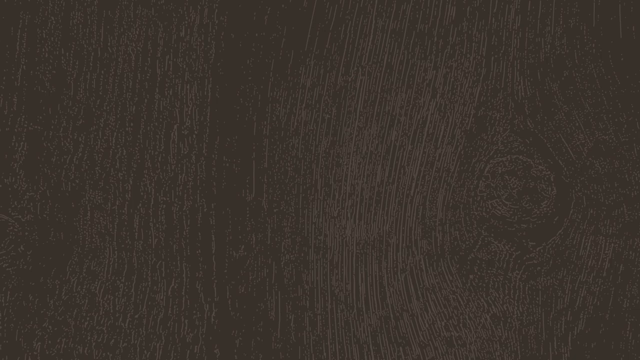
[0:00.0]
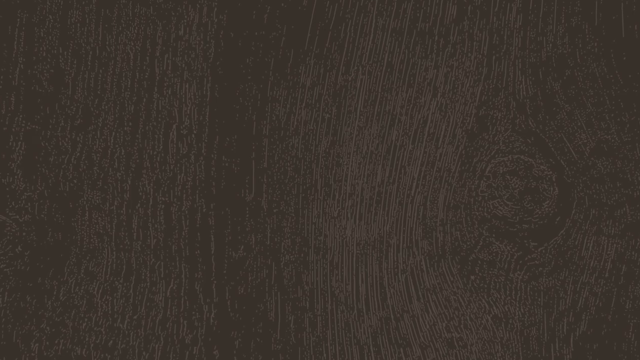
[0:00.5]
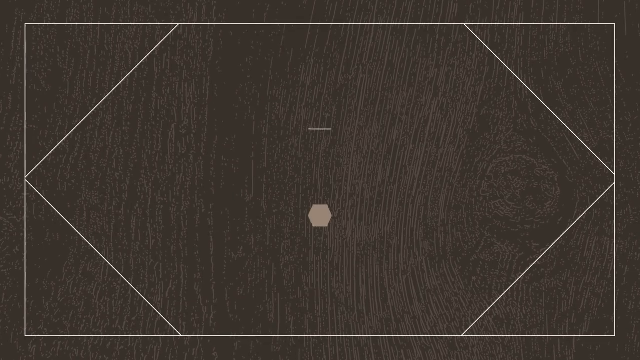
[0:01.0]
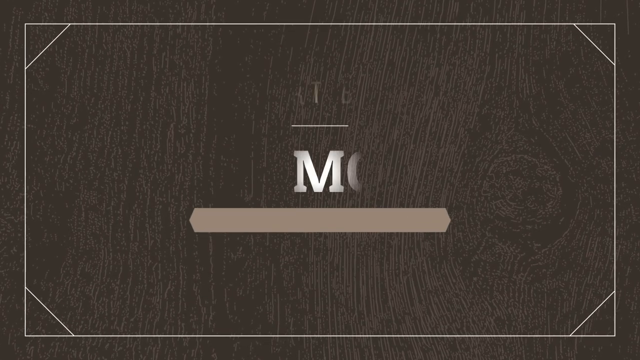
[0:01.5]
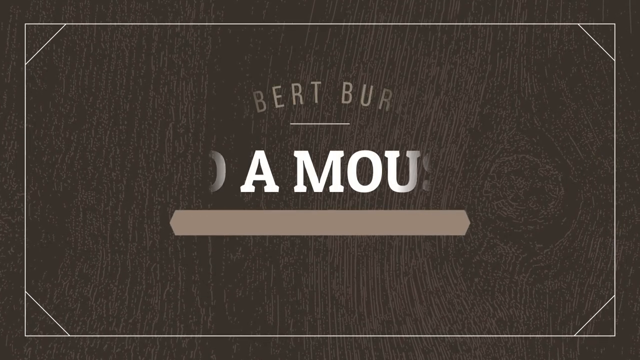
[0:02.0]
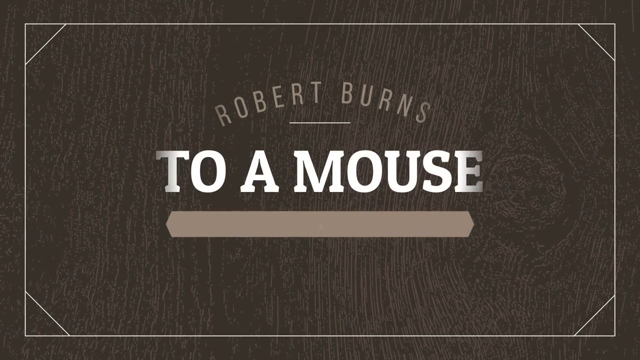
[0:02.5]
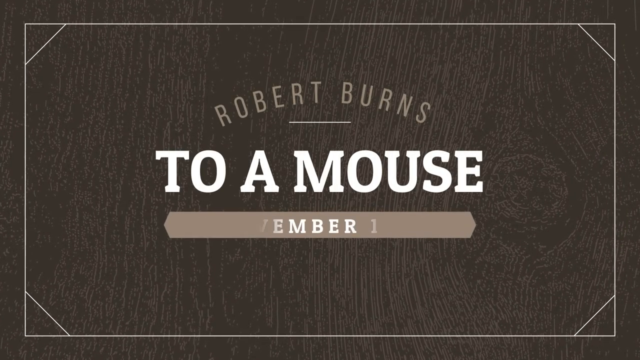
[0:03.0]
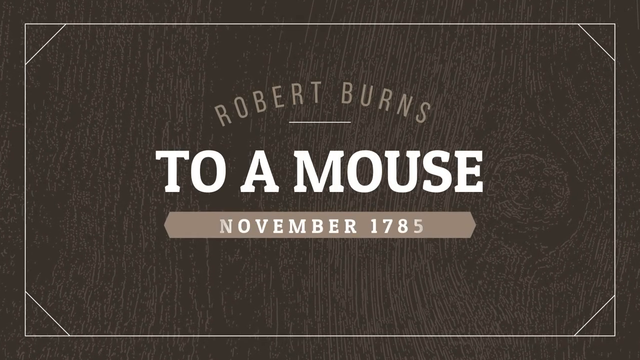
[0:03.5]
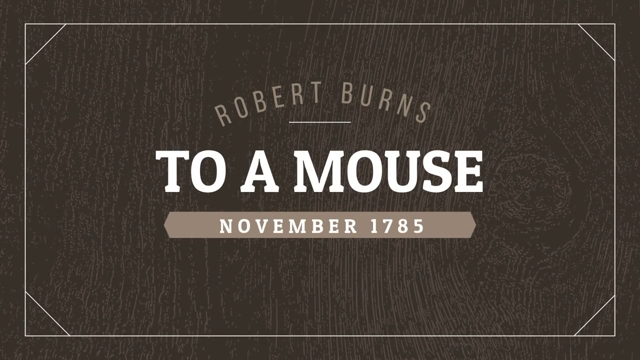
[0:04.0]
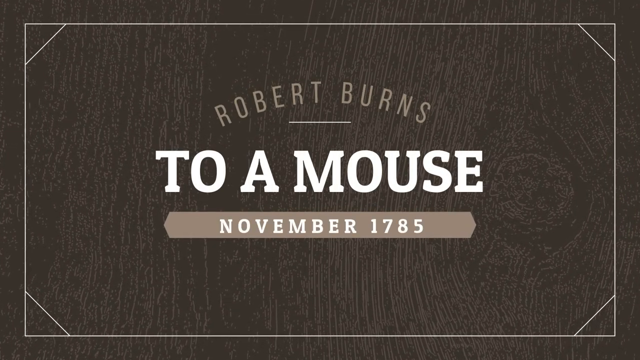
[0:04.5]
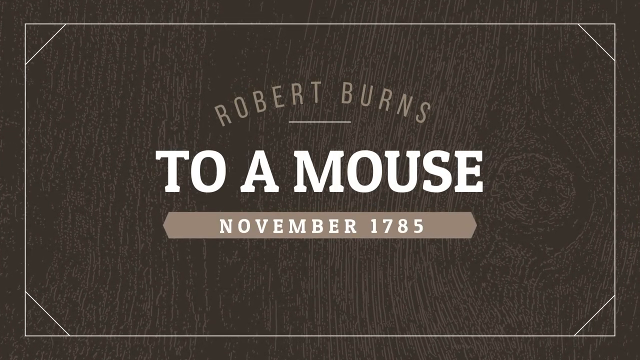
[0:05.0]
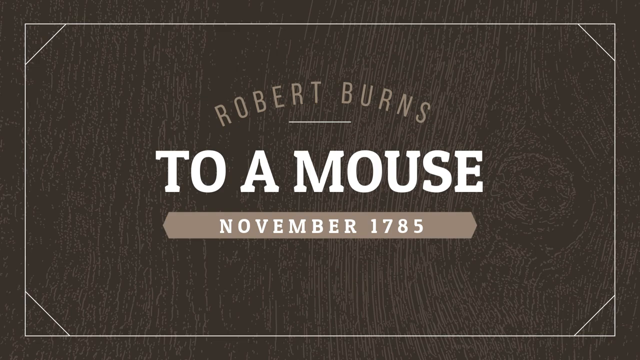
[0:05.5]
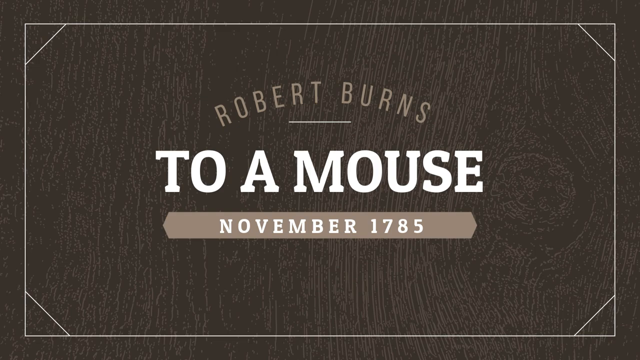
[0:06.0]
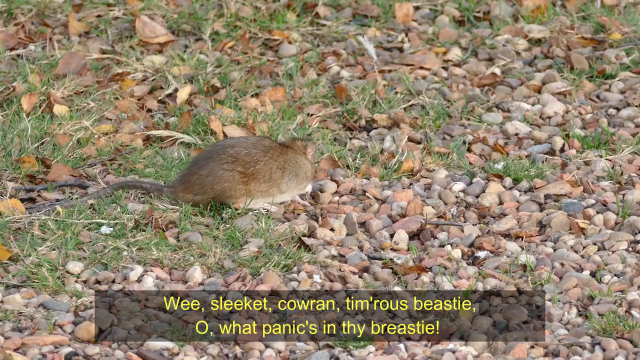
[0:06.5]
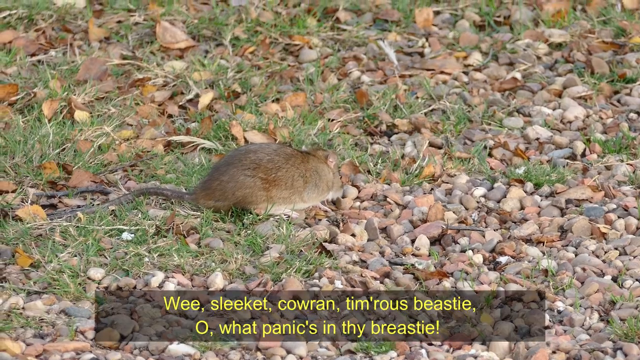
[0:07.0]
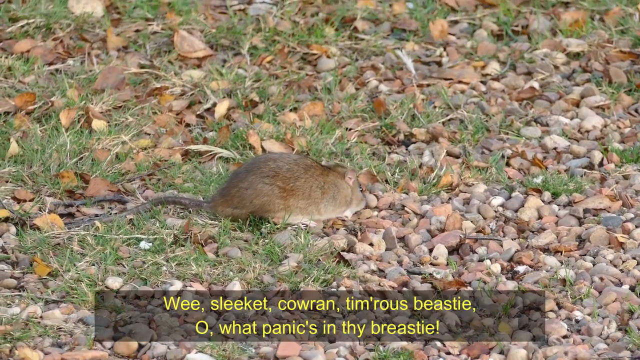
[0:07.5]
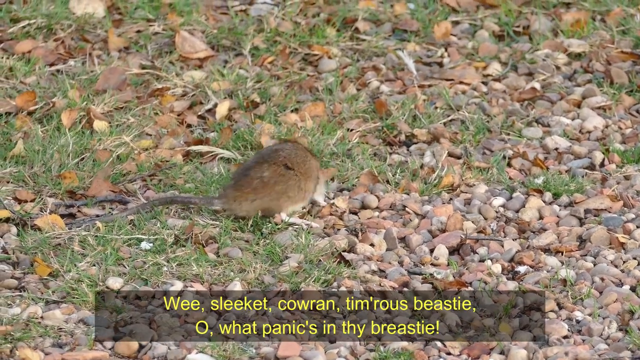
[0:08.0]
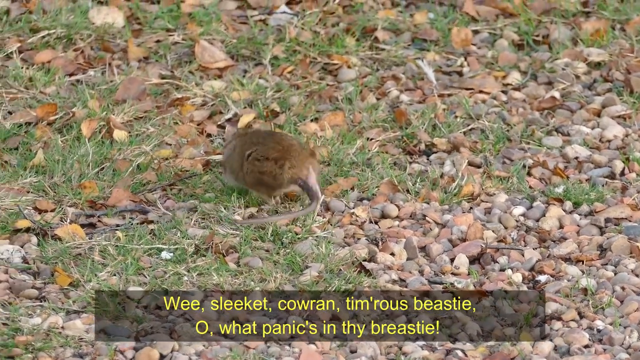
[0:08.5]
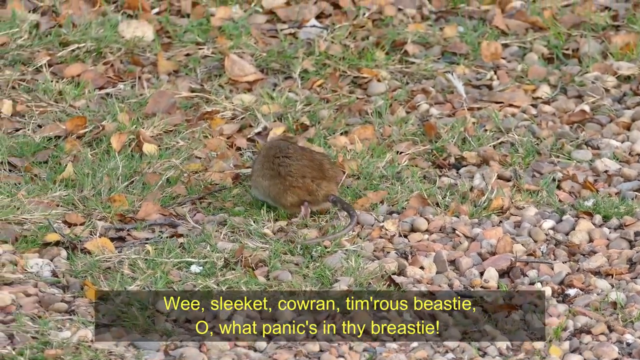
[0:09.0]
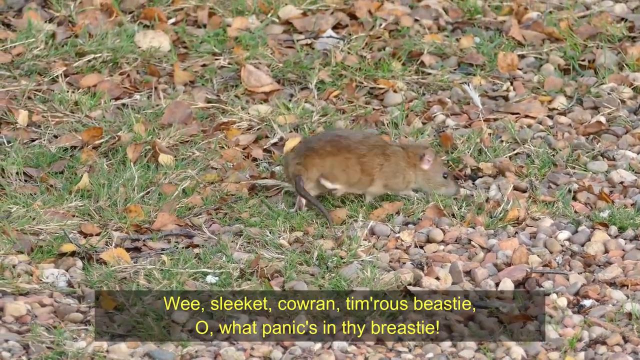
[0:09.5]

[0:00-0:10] A dark wood-green pattern fills the background as text appears on screen reading "Robert Burns, to a mouse, November 1785," styled so that it almost looks like a placard. "Robert Burns" is sort of arched across the top in tan, "to a mouse" runs across the center in white, and "November 1785" looks almost metallic on a tan background. The video then cuts to an image of a very big mouse, rat or some kind of rodent among grass, pebbles and dried fall leaves. Across the bottom, text written in what seems to be Scottish or Irish Gaelic slang reads "wee sleeket cowren tim'rous beastie oh what panic's in thy breastie." The field mouse, brown with a darker-colored tail and facing away from the camera, kind of scurries around, checking things out and sniffing in the grass.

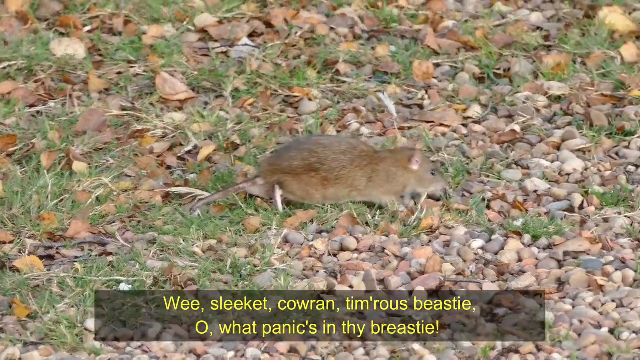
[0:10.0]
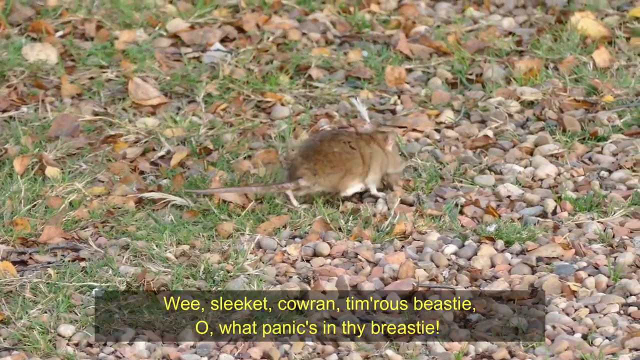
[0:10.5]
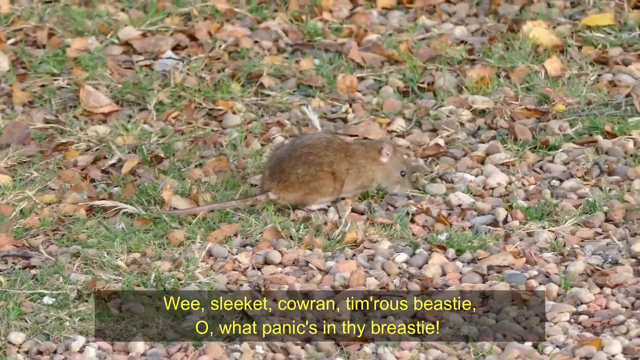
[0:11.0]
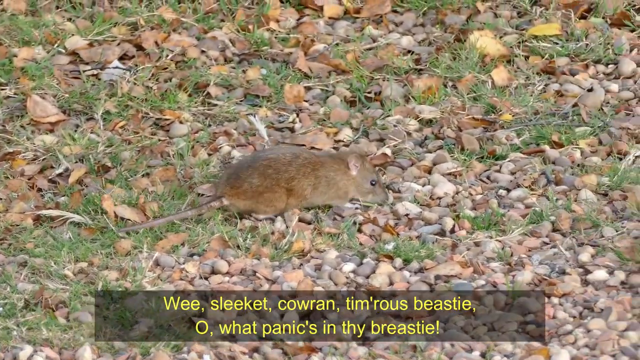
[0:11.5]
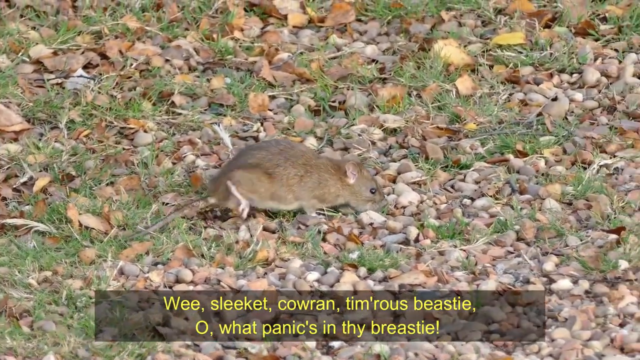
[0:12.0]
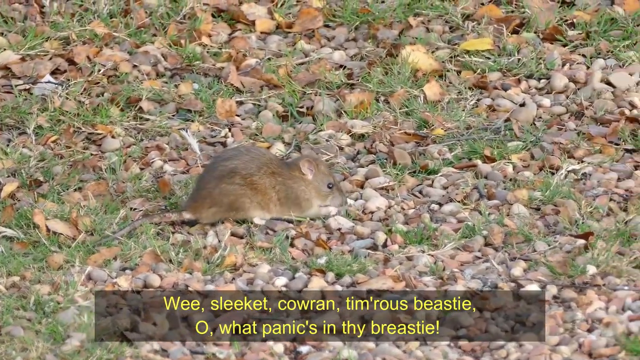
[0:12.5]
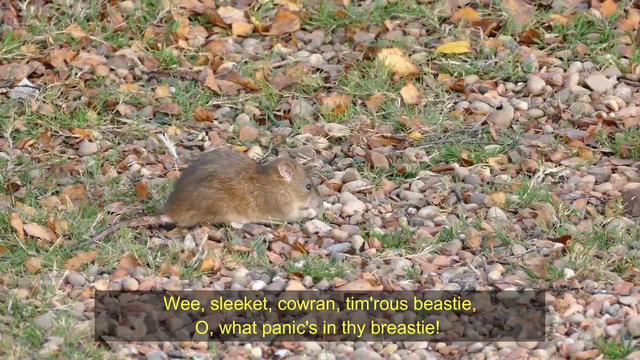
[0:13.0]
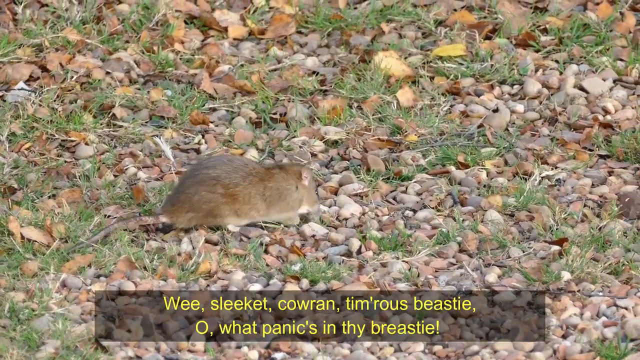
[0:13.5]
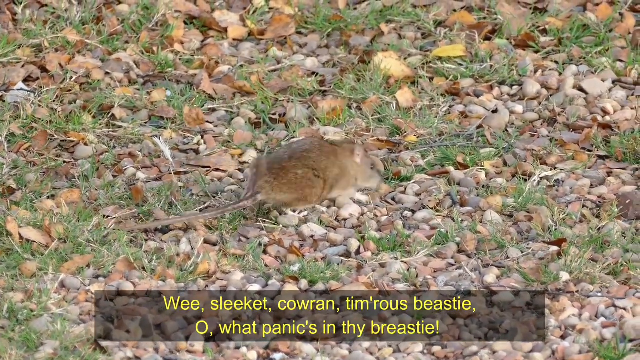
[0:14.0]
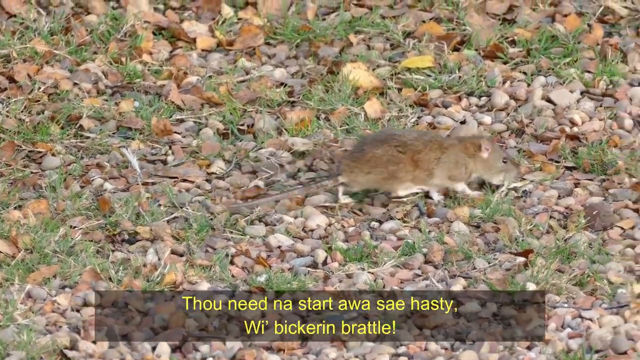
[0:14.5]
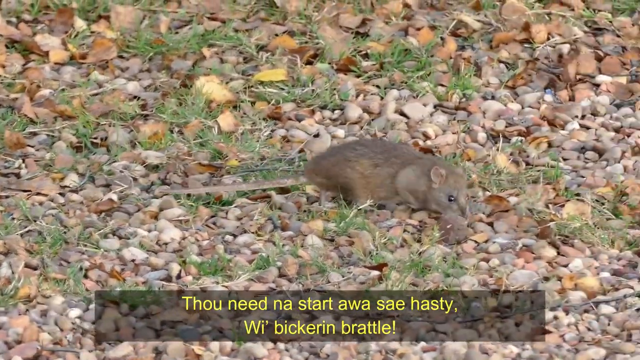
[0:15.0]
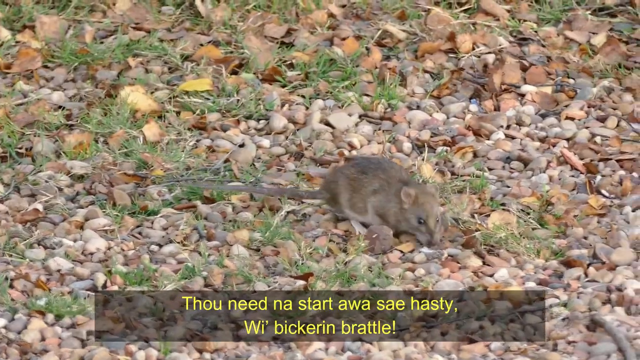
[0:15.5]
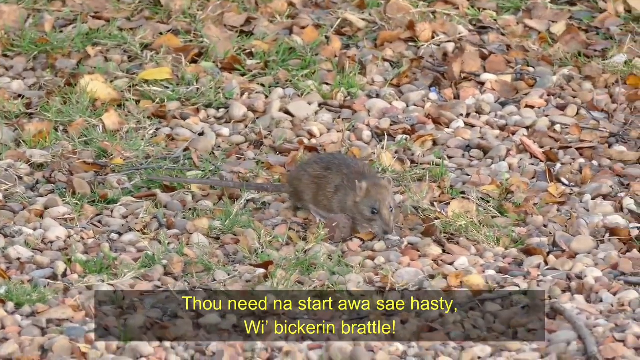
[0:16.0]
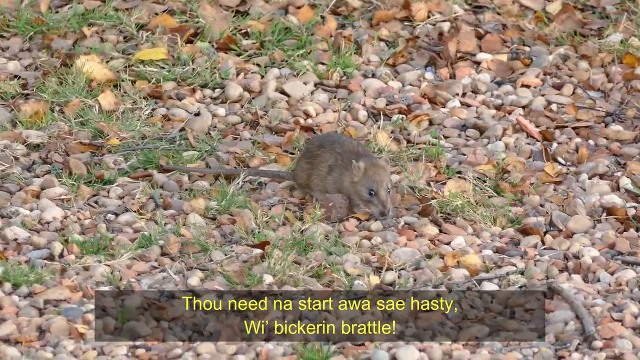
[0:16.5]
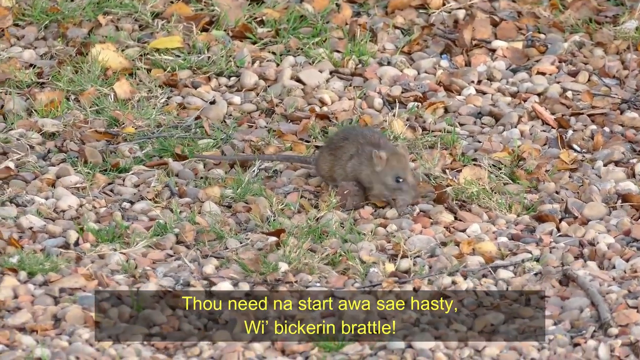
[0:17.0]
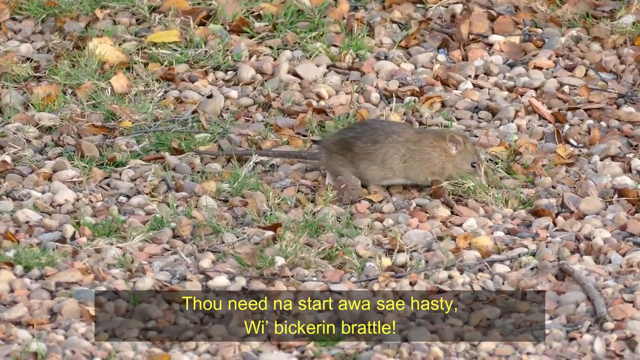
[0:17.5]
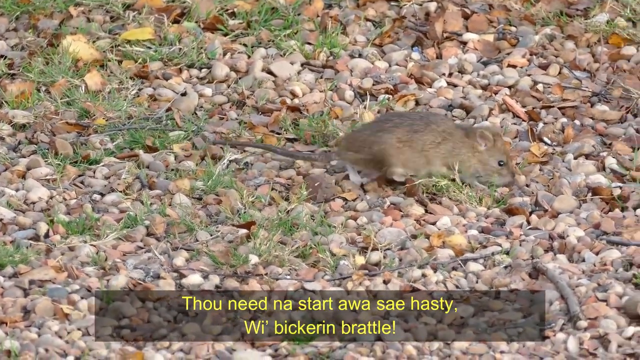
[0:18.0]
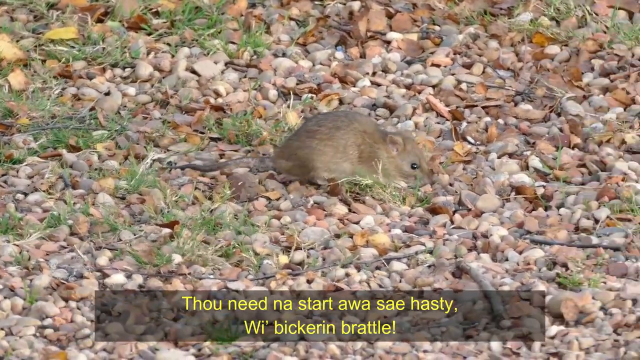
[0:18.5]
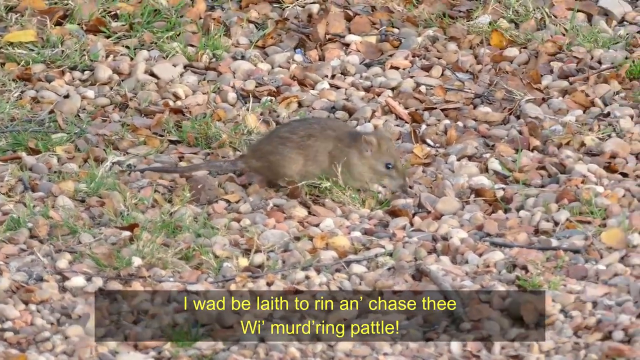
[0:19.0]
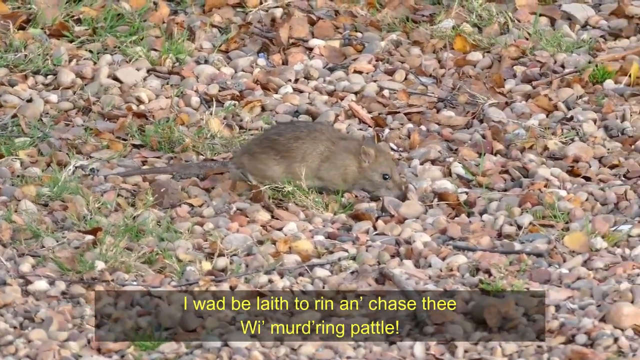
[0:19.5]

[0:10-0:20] The little field mouse walks around, sniffing and exploring. It looks like it has maybe found something to nibble on, and it brings its front feet up to its mouth. Text in Scottish or Irish slang appears at the bottom of the screen like closed captioning, in yellow font, reading "thou need na start awa sae hasty wi bickerin brattle." The mouse keeps moving around, finding little things to eat here and there. The words at the bottom then change to "I wad be laith to rin an' chase thee wi murderin paddle."